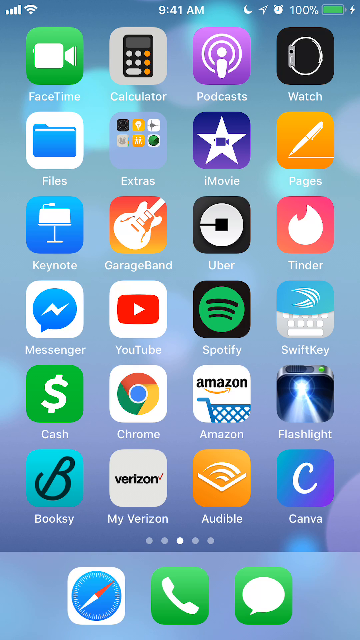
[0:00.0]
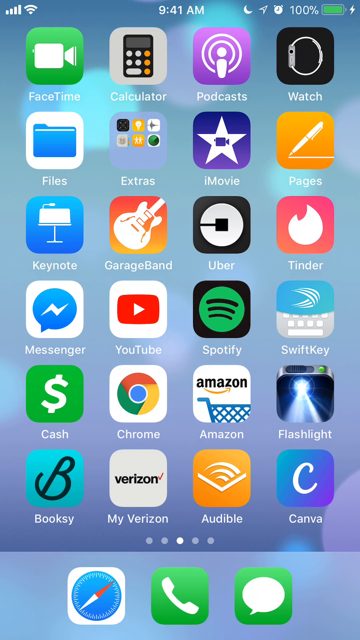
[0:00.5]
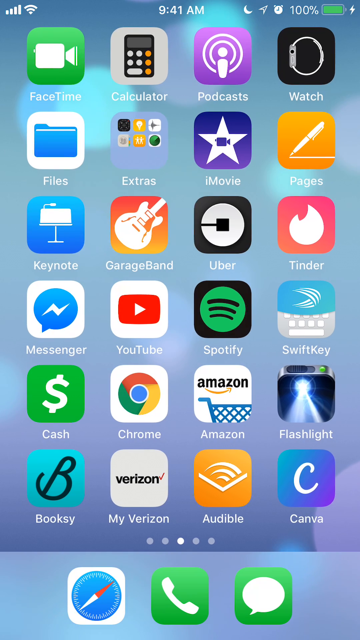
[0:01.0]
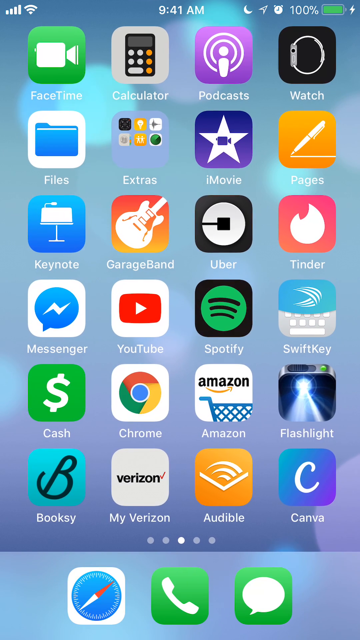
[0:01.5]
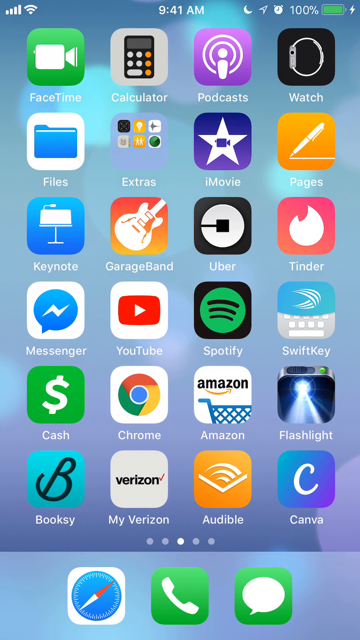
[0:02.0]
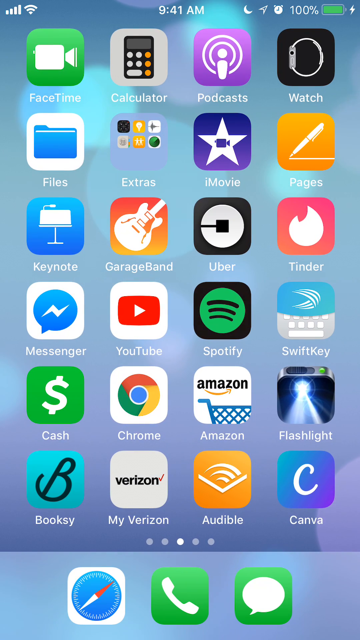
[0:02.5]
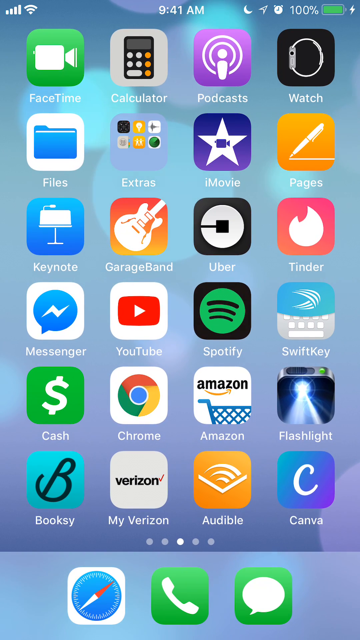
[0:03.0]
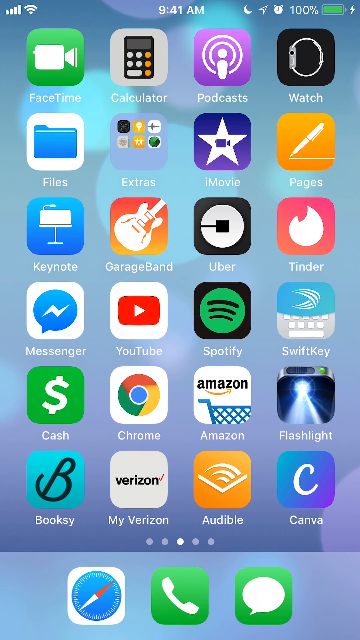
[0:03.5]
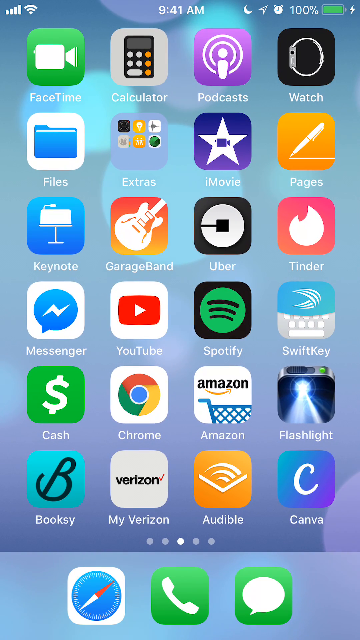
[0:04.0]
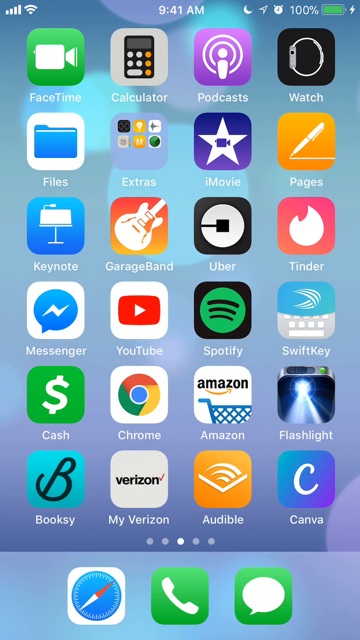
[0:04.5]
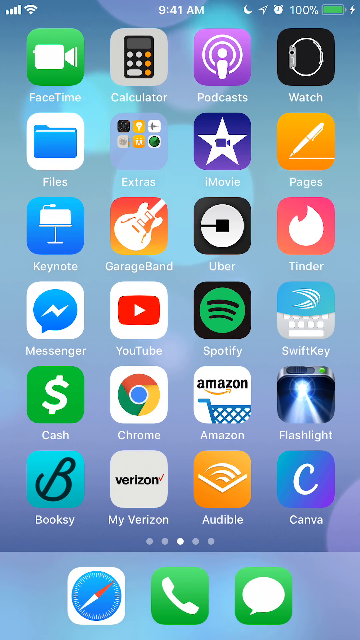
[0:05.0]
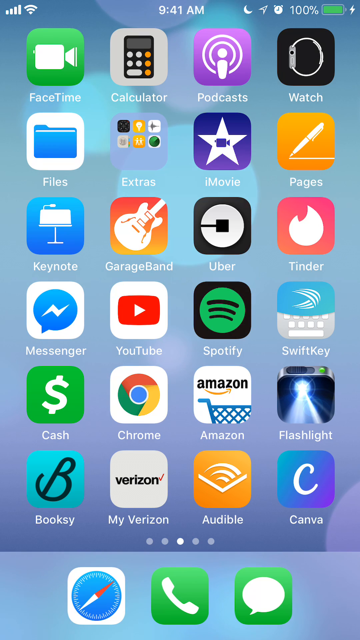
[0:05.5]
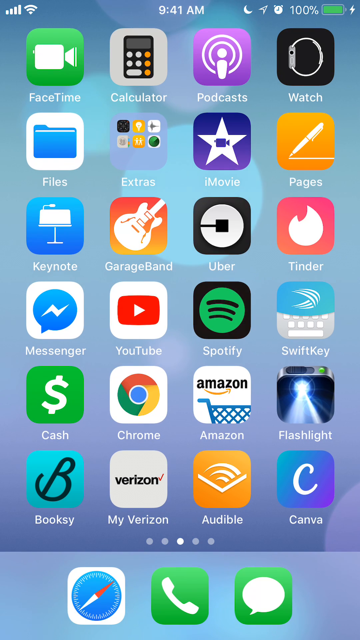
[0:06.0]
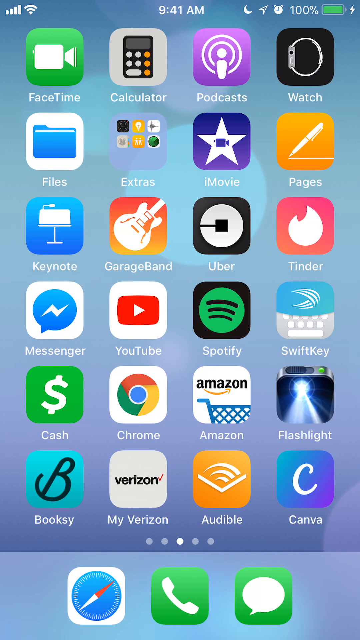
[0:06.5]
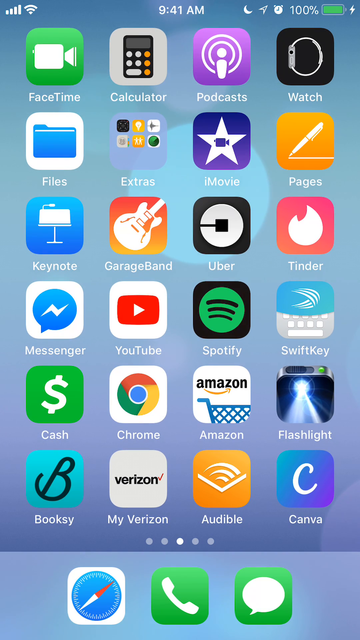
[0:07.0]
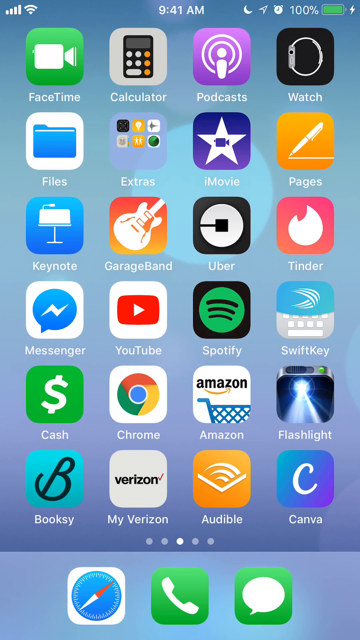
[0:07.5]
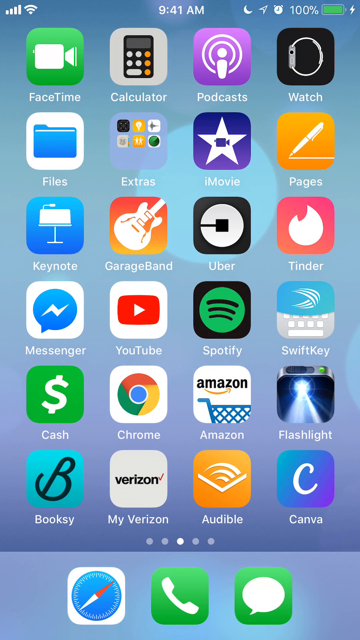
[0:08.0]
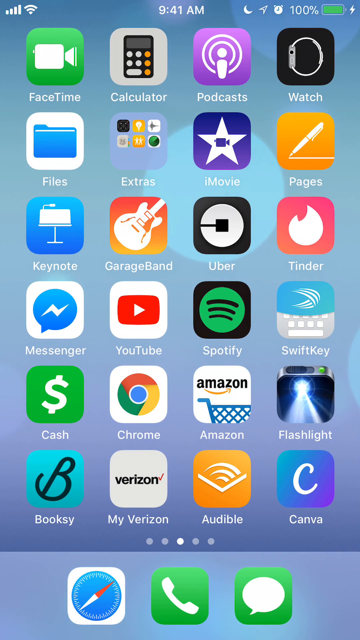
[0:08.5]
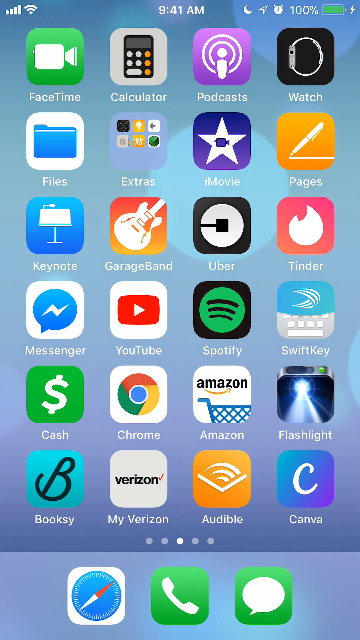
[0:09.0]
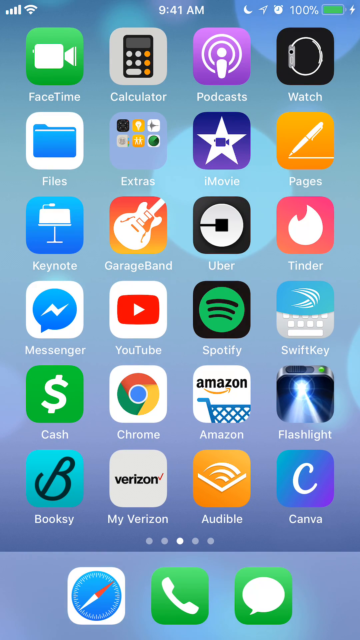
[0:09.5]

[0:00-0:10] A smartphone screen is shown with several icons or shortcuts on it, including Google Chrome, Cash App and Amazon, plus a shortcut to turn on the flashlight and over a dozen other shortcuts. Other app shortcuts include FaceTime, Calculator, Podcasts, Watch (for a smartwatch), Files, Keynote, GarageBand, Uber, Tinder, iMovie, Extras (a folder with a bunch of different icons inside it), Messenger for Facebook, YouTube, Spotify, SwiftKey and several others.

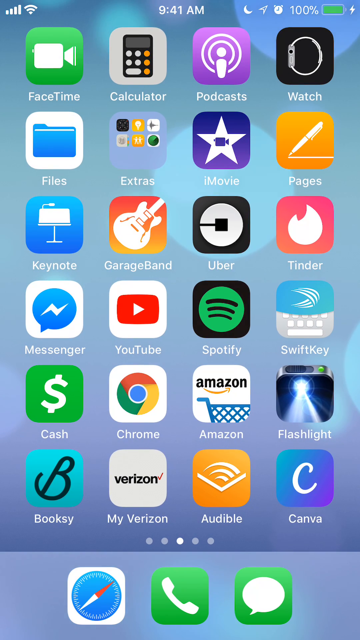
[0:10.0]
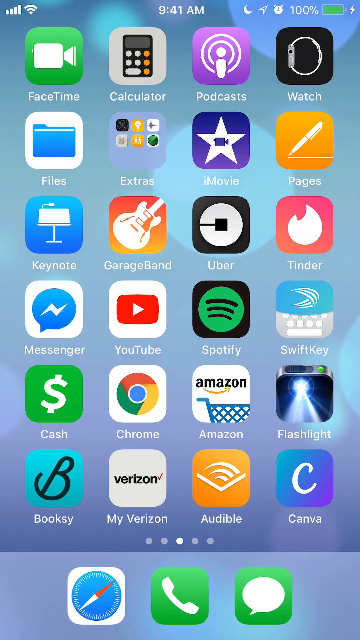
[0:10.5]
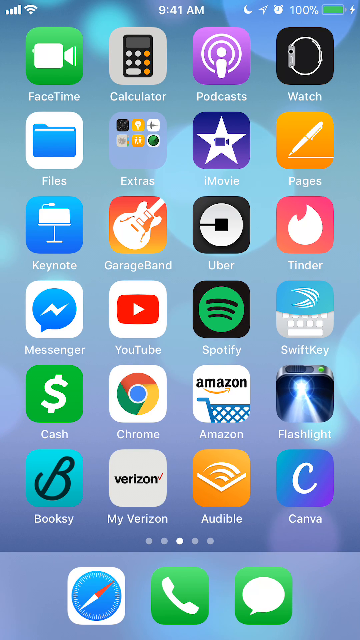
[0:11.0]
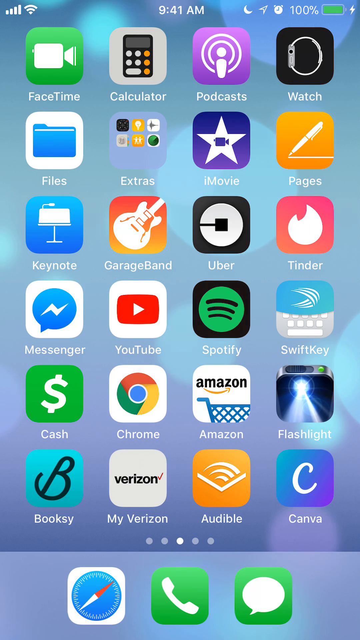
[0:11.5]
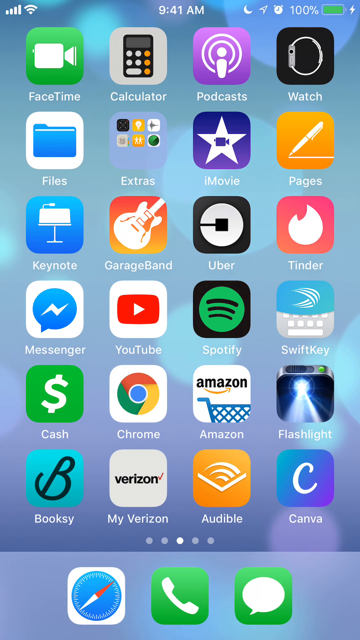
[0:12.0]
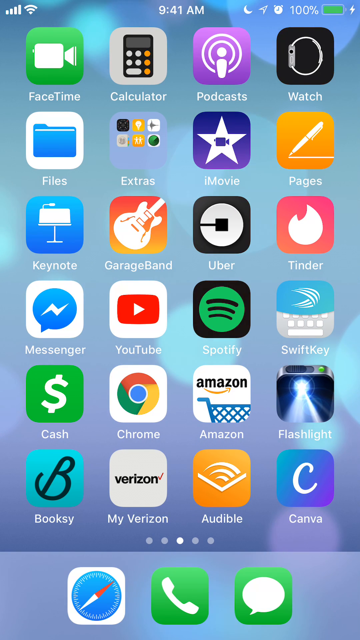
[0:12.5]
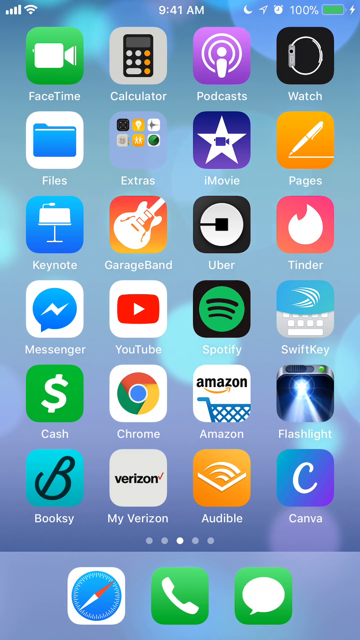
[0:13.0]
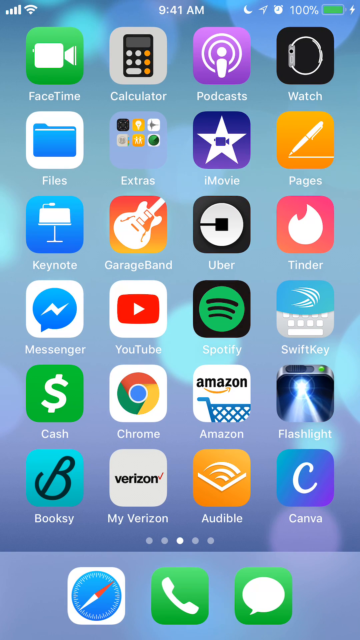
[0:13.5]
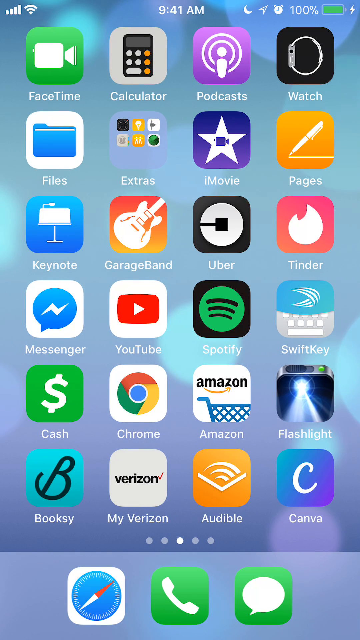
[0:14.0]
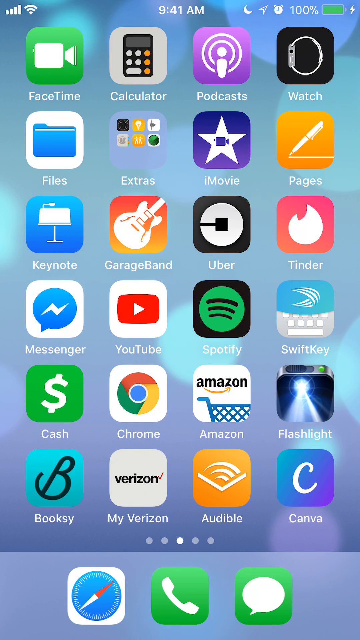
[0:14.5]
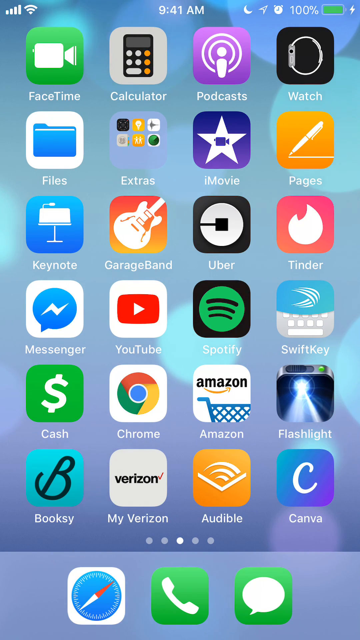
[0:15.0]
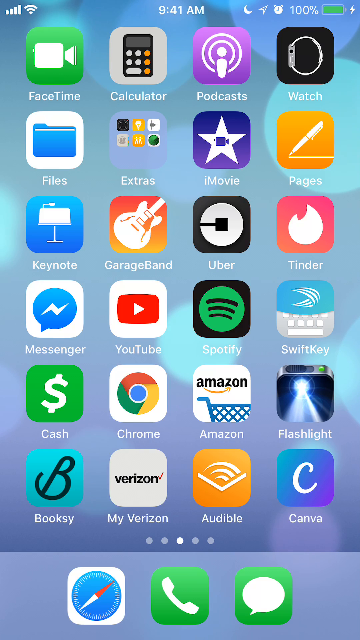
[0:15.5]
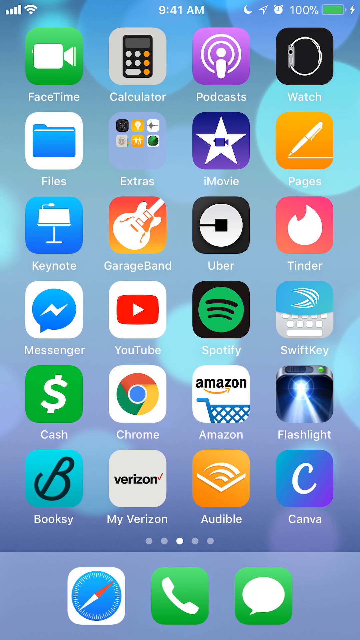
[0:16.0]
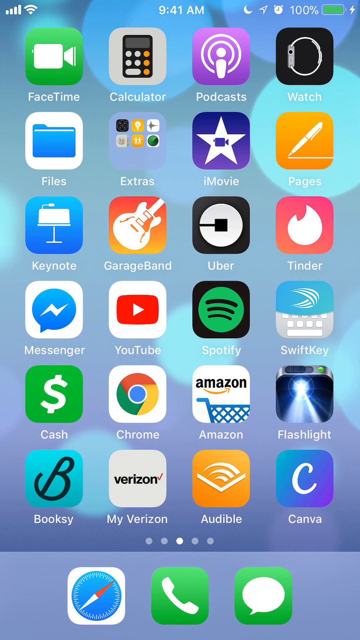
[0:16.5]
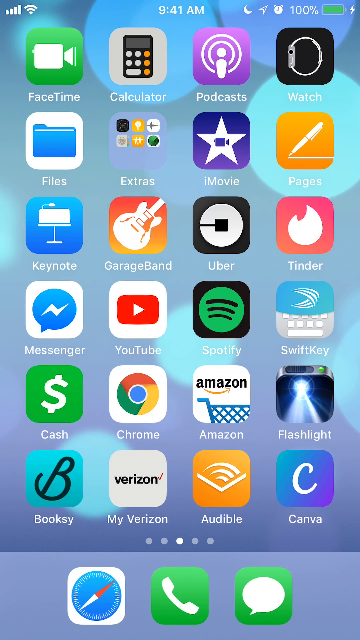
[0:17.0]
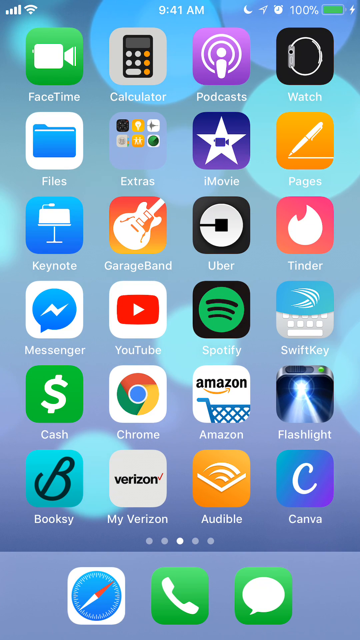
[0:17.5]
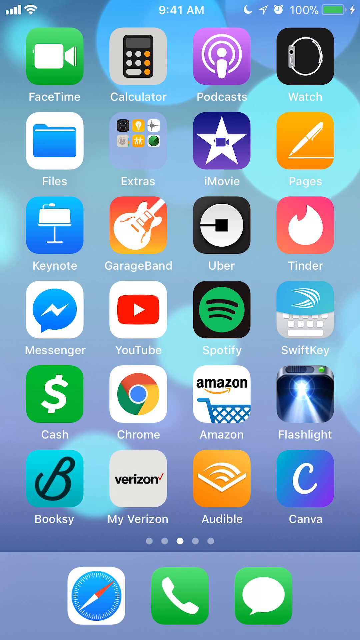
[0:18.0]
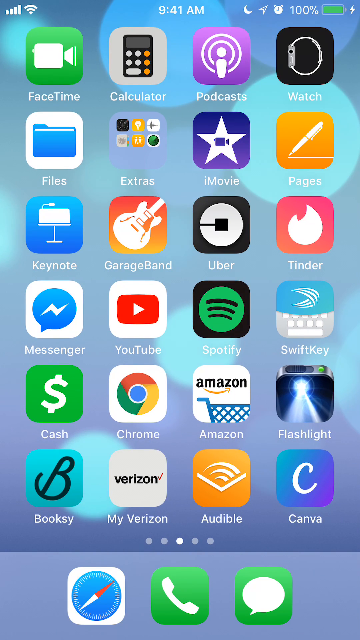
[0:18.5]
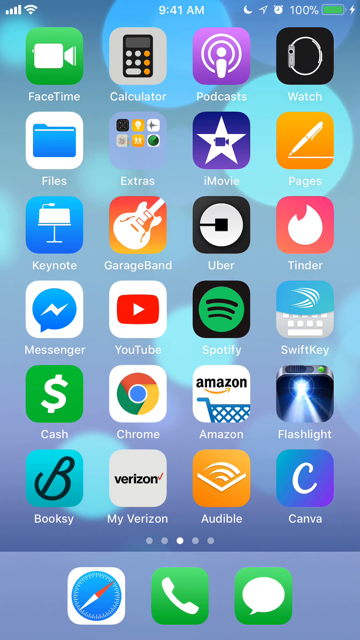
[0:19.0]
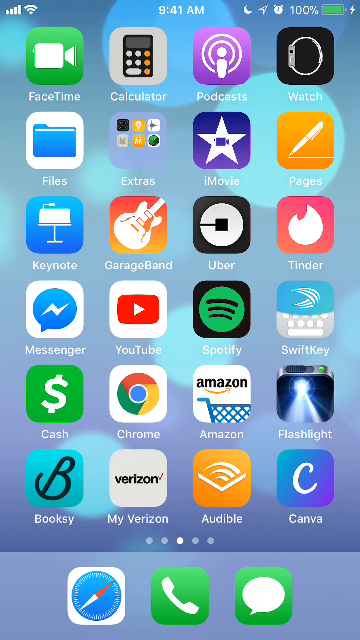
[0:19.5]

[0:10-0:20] The face of a smartphone shows several apps on the page, something like the home screen. At the bottom are the Safari browser, the phone, and a chat icon. Other icons or shortcuts on the screen are Booksy, My Verizon, Audible, Canva, a flashlight app, Amazon, Google Chrome, Cash App, Messenger (Facebook Messenger), YouTube, Spotify, SwiftKey, Tinder, Uber, GarageBand, Keynote, a shortcut to Files, Extras (a folder with several other icons or shortcuts inside it), iMovie, Pages, Watch (the smartwatch), Podcast, Calculator and FaceTime.